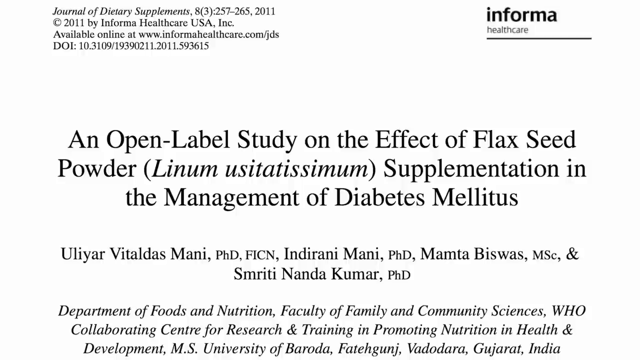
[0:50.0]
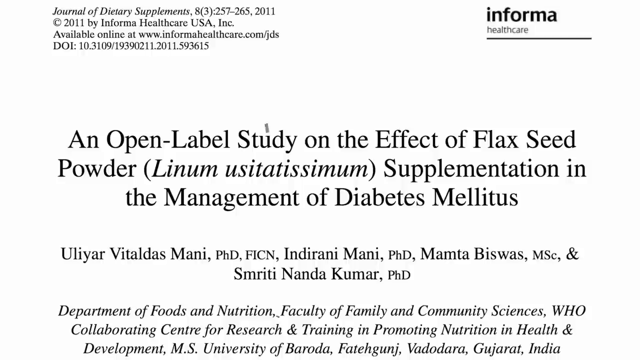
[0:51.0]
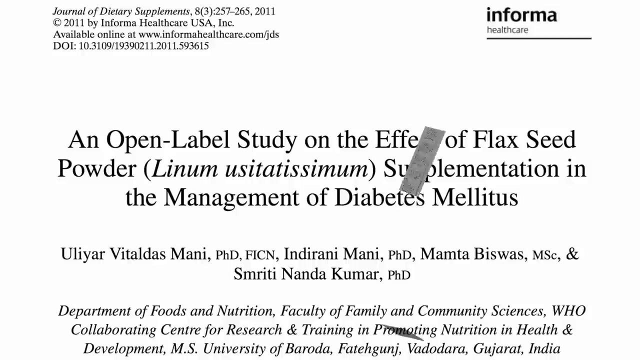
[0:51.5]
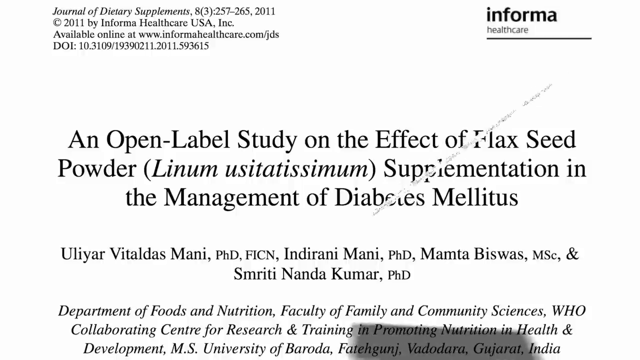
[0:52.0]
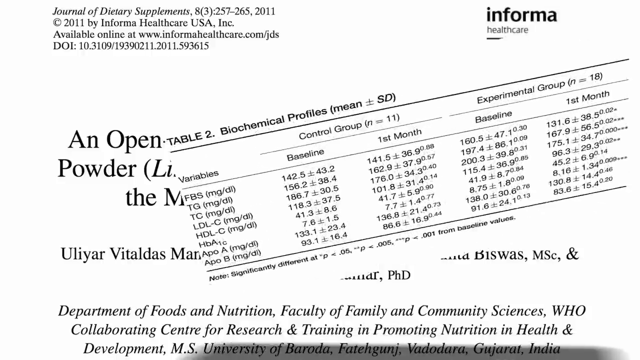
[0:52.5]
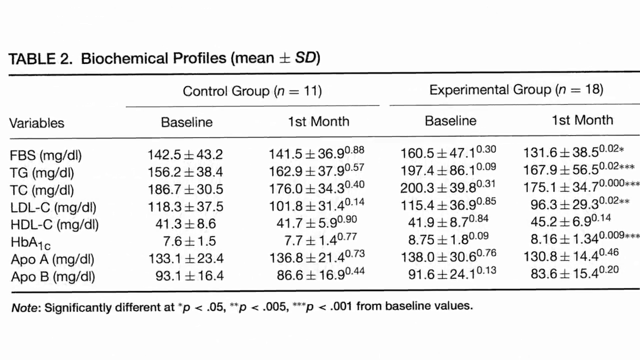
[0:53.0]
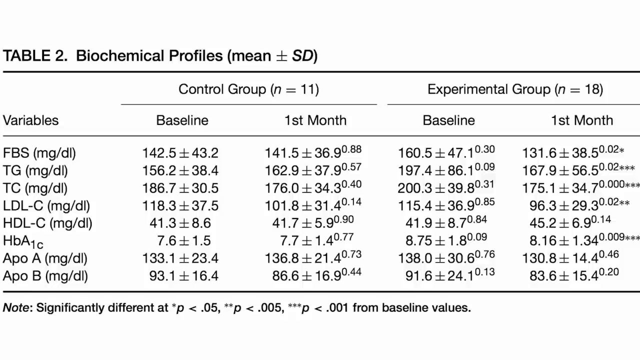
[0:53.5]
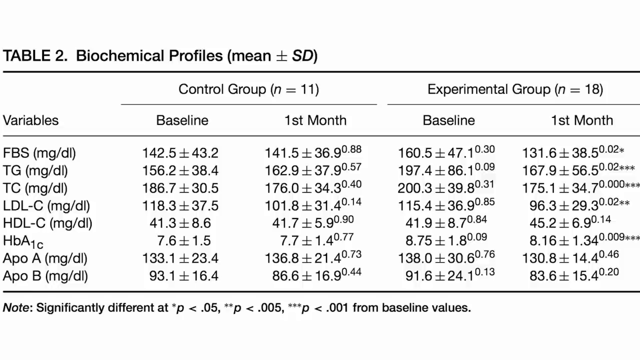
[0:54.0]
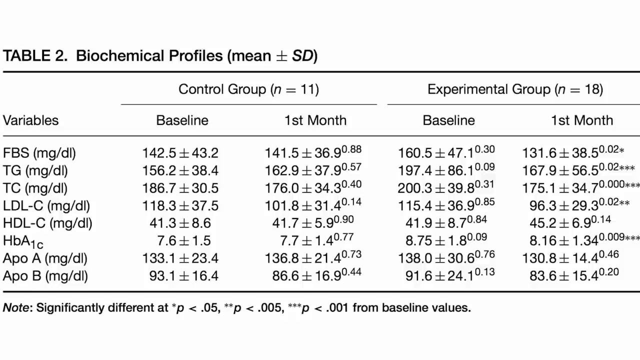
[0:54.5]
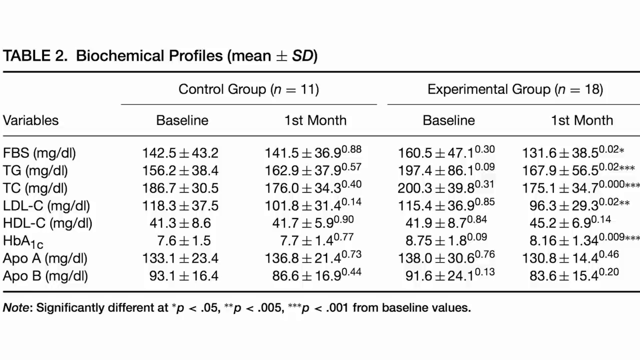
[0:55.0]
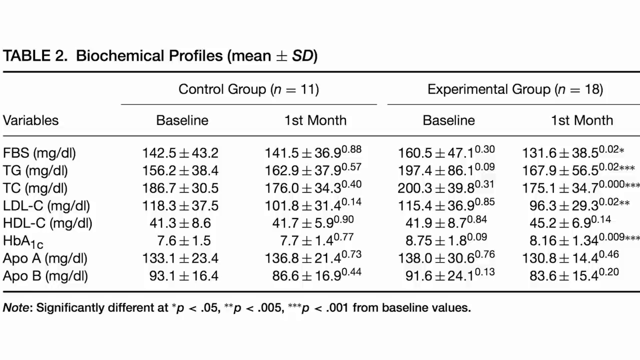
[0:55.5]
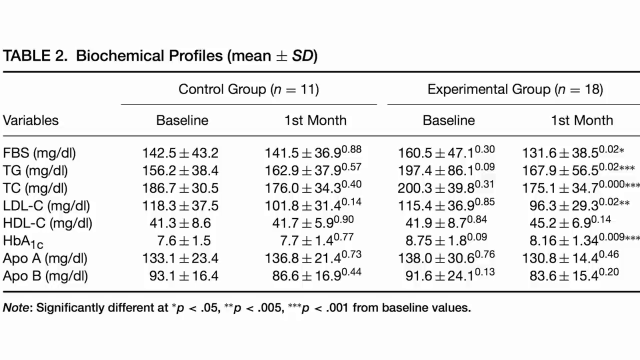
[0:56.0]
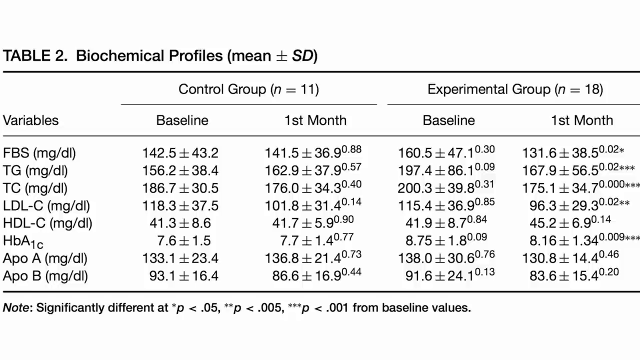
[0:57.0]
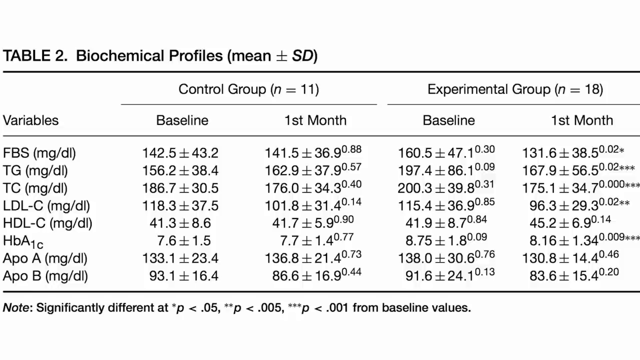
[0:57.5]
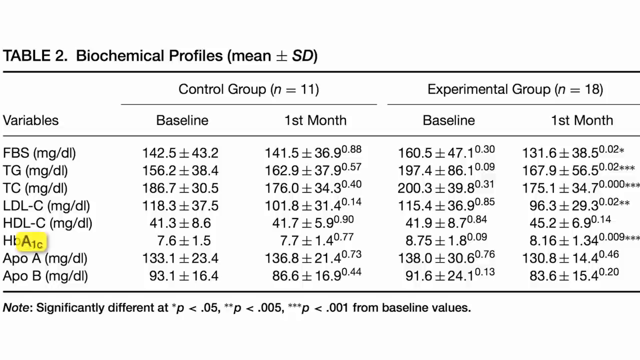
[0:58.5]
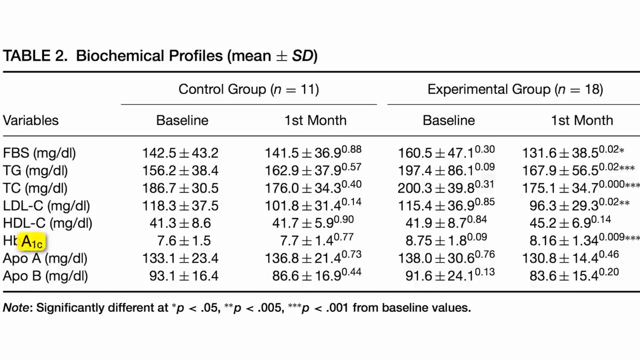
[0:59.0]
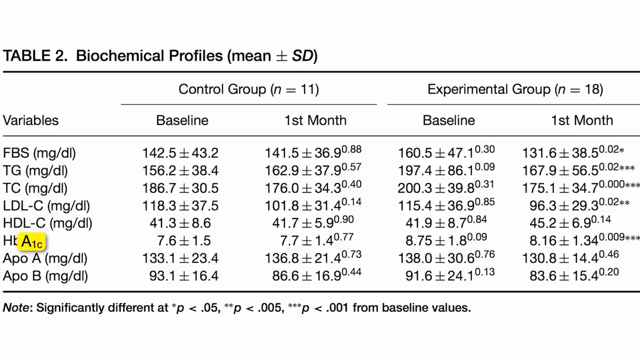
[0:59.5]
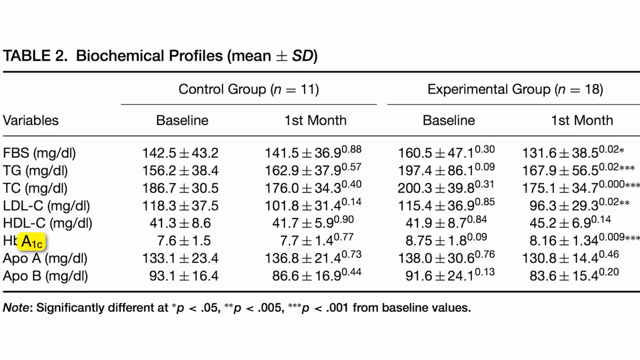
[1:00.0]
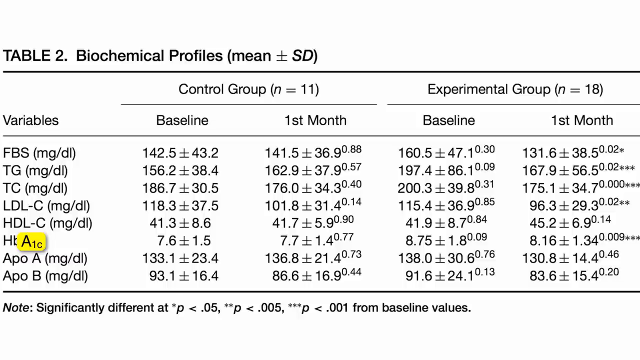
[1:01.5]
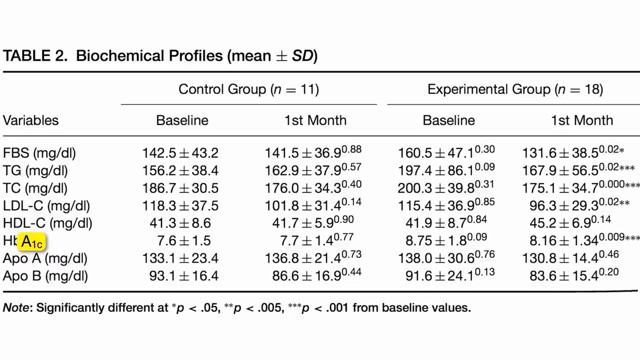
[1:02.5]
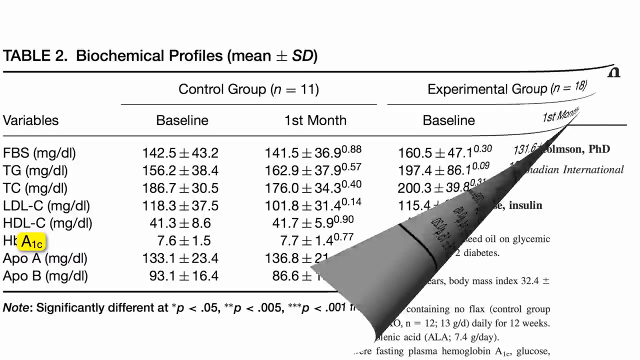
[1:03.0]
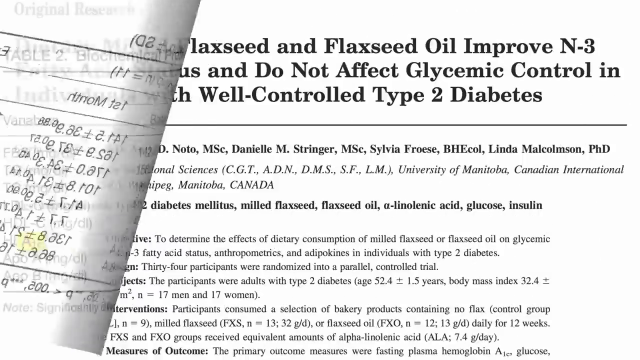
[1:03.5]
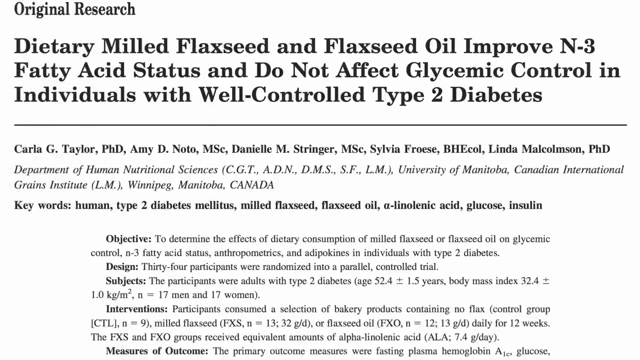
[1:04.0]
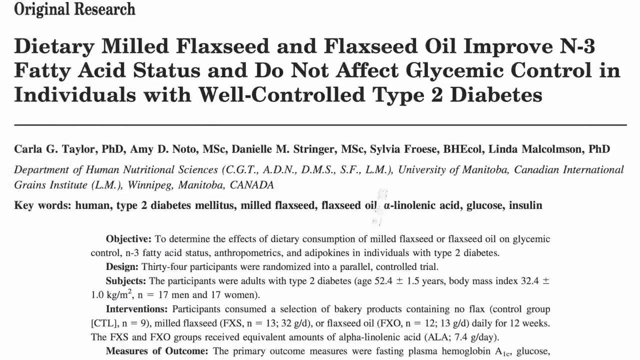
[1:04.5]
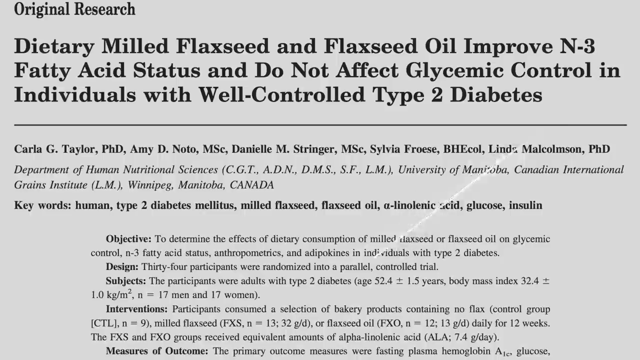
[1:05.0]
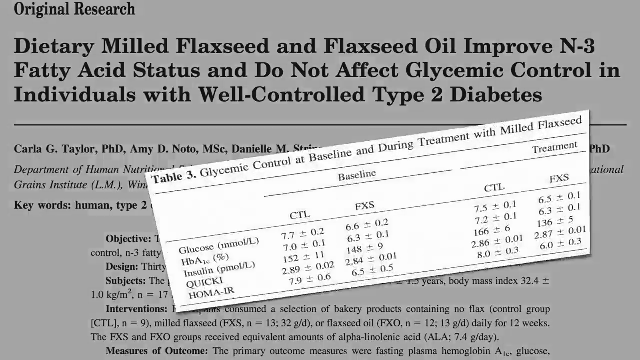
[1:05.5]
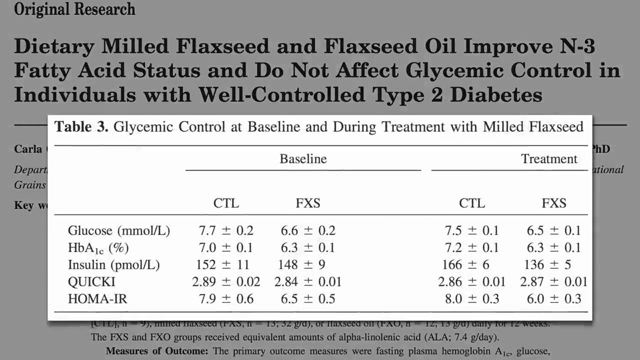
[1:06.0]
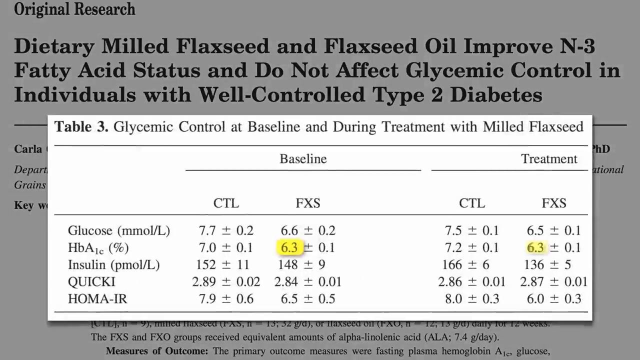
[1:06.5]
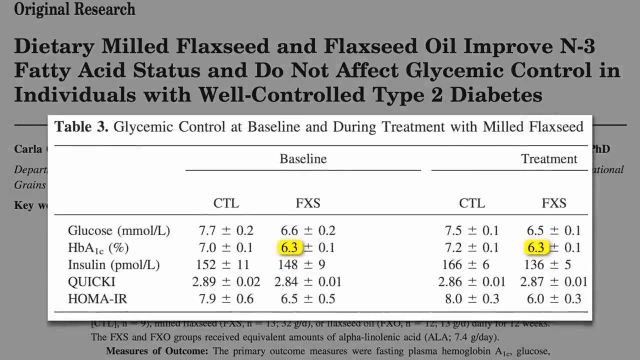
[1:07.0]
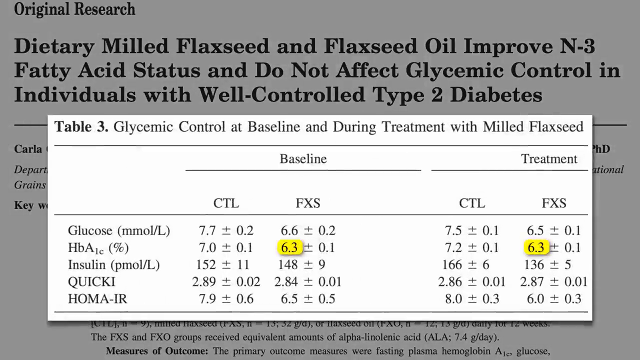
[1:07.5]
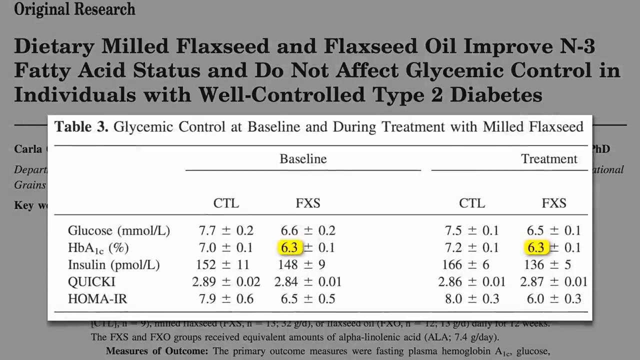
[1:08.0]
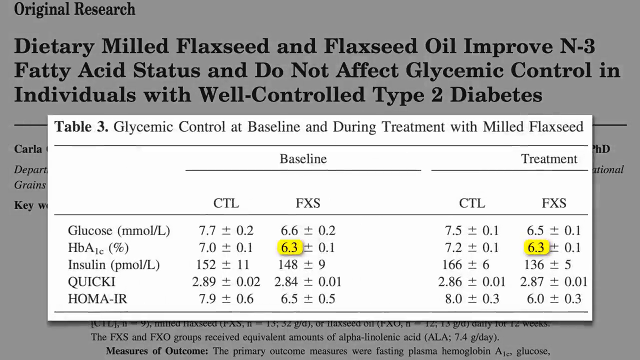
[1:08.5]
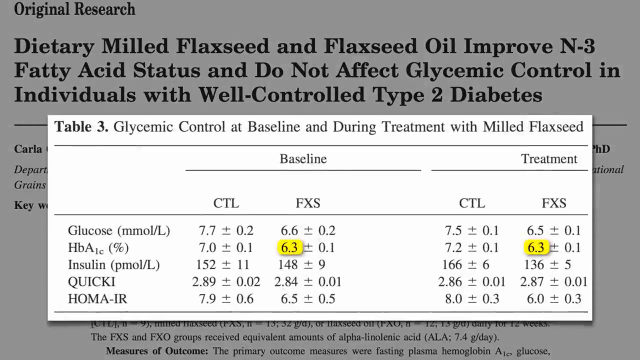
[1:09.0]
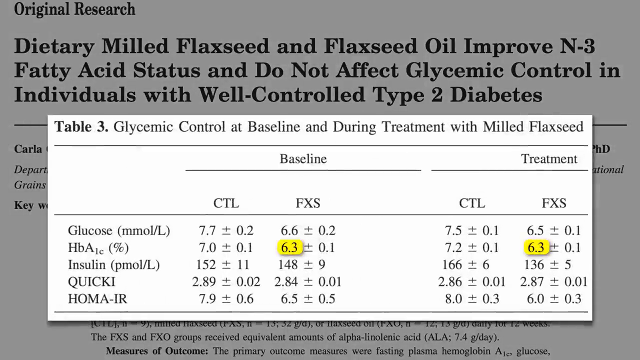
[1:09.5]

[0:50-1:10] An article's heading shows "Informa" in bold black font in the top right-hand corner, with "Healthcare" in a much smaller font below it and a little line underneath. The article's title is "an open label study on the effect of flaxseed powder (Linum usitatissimum) supplementation in the management of diabetes mellitus", followed by the names of the doctors and people involved. An excerpt from the article then appears on screen, reading "Table 2 Biochemical profiles (mean ± SD)". A solid black line runs from left to right across the screen, and below it are "control group n = 11" and "experimental group n = 18", each with a thin line underneath. The table's headings are "variables", "baseline", "first month", "baseline", "first month", and below them are many numbers and ranges for different variables.